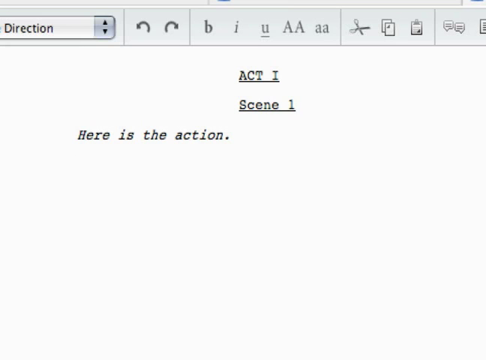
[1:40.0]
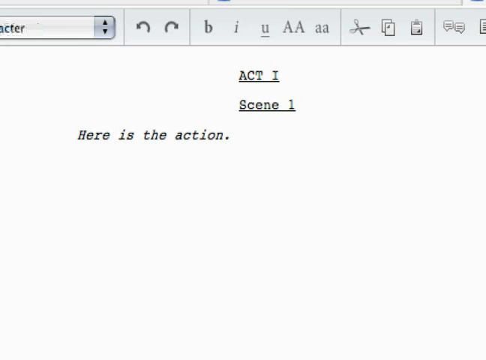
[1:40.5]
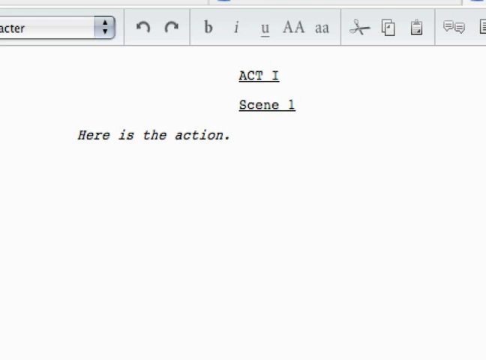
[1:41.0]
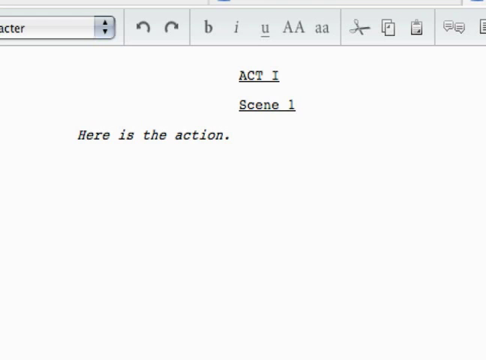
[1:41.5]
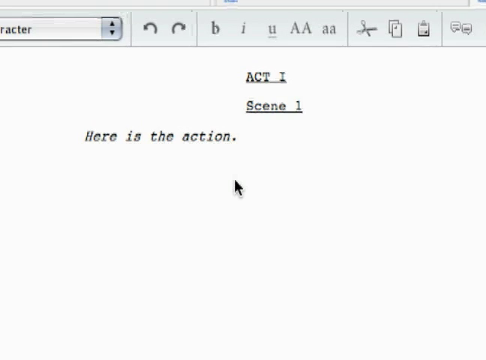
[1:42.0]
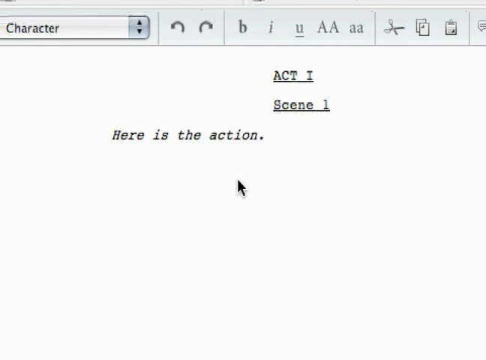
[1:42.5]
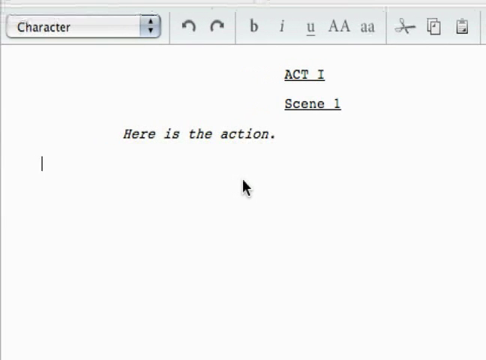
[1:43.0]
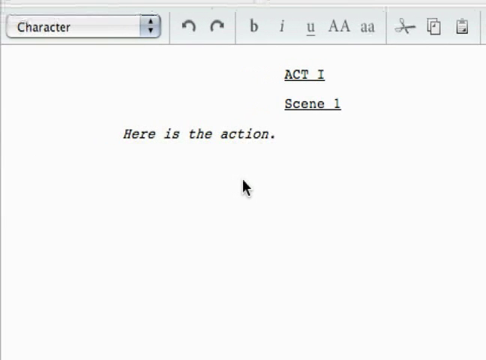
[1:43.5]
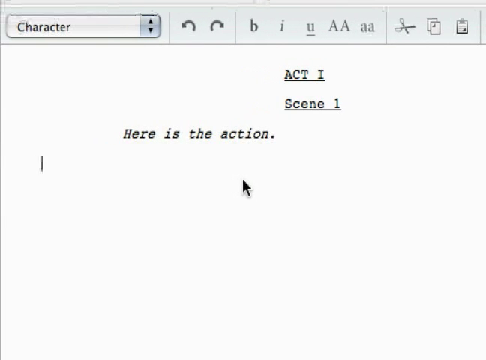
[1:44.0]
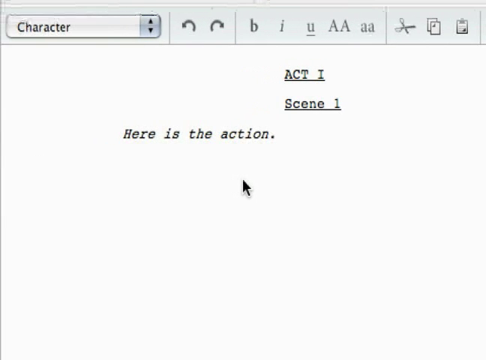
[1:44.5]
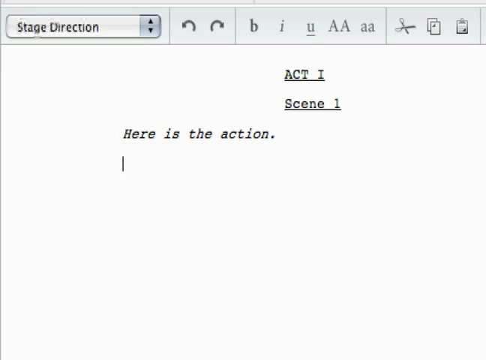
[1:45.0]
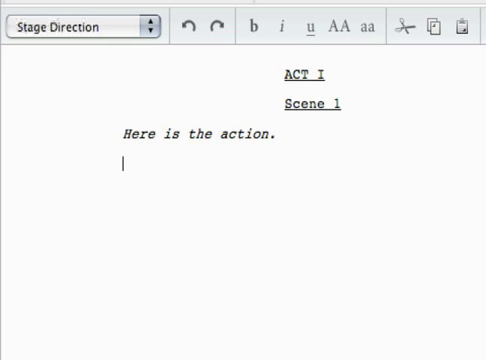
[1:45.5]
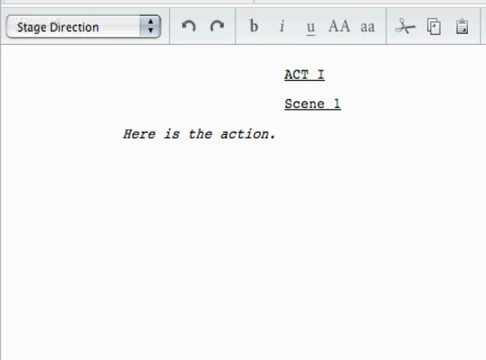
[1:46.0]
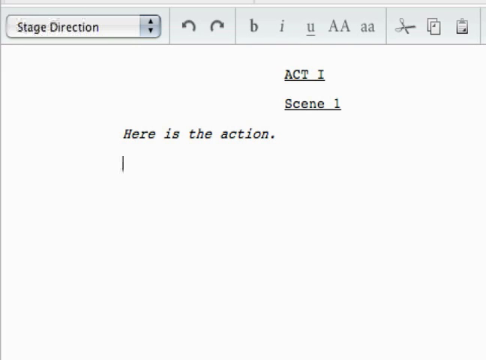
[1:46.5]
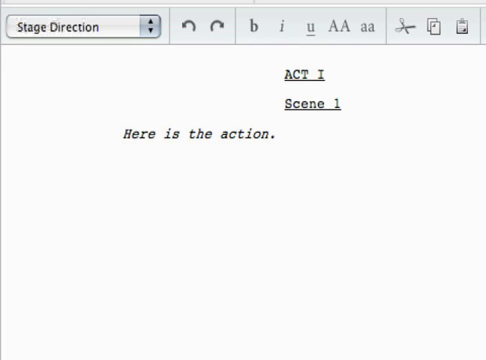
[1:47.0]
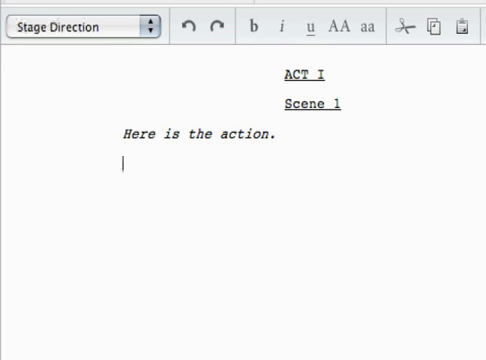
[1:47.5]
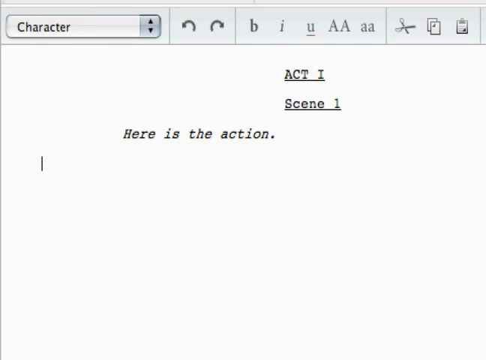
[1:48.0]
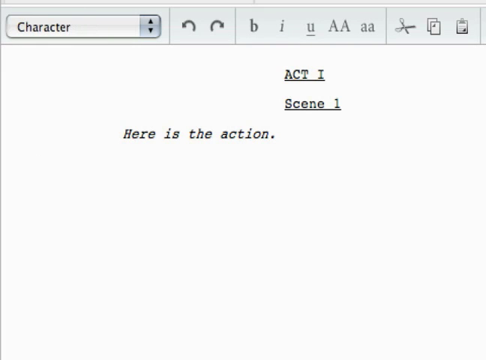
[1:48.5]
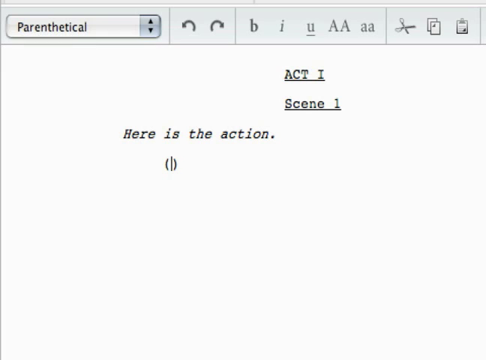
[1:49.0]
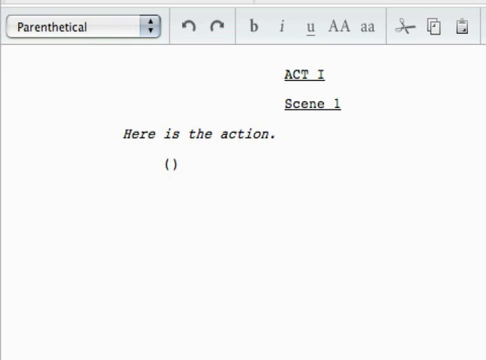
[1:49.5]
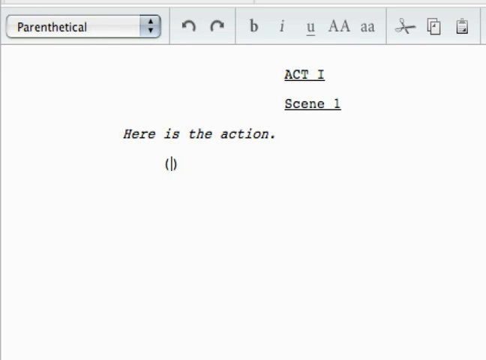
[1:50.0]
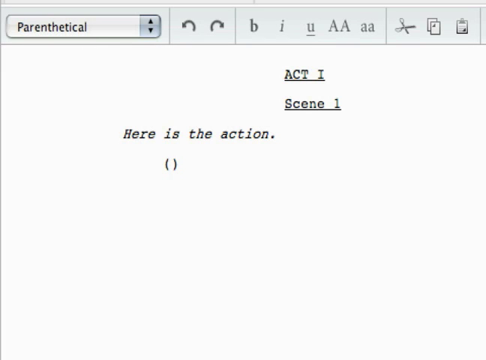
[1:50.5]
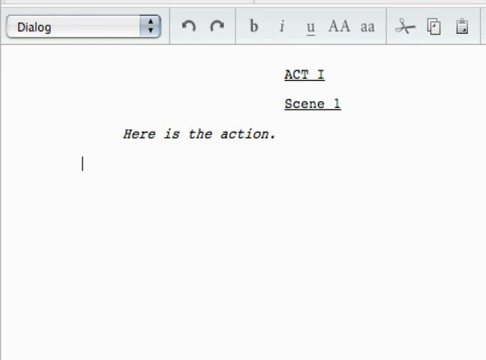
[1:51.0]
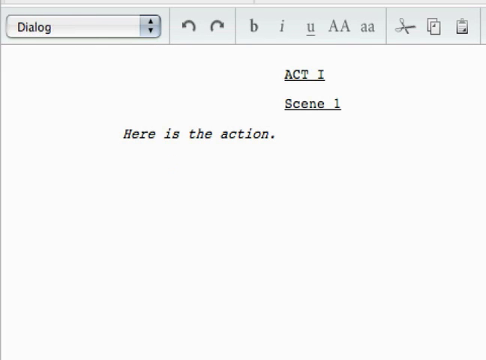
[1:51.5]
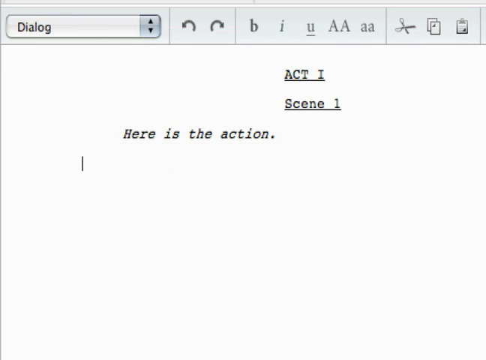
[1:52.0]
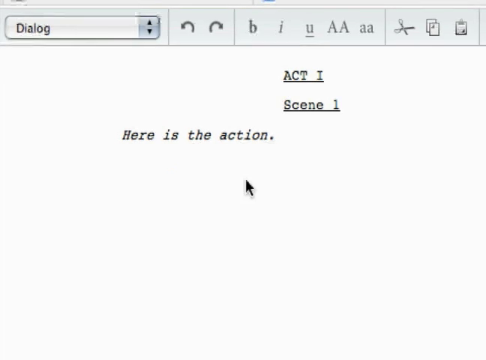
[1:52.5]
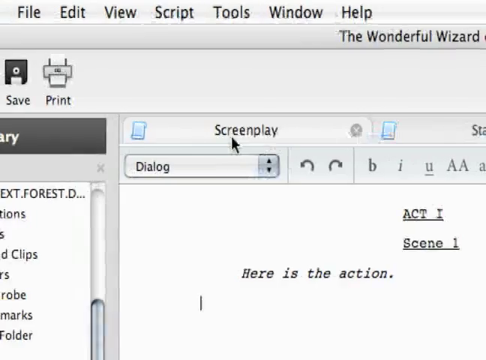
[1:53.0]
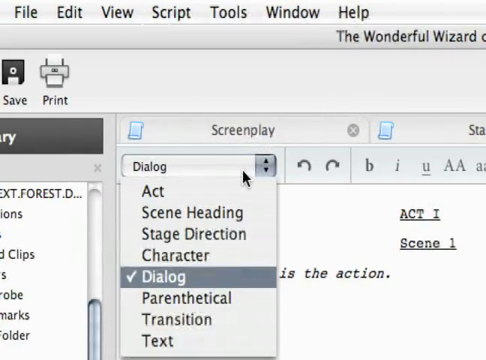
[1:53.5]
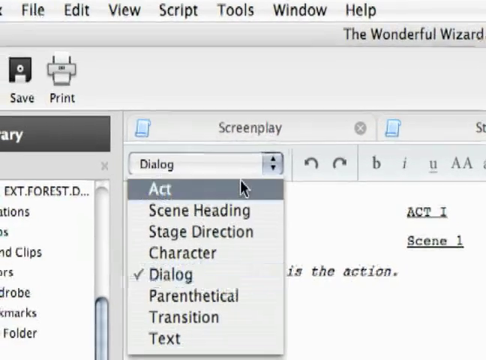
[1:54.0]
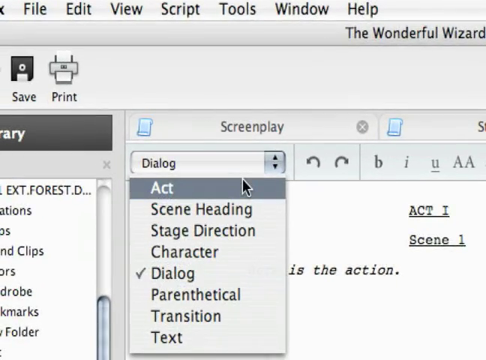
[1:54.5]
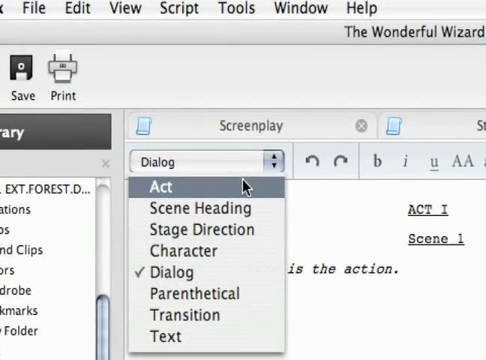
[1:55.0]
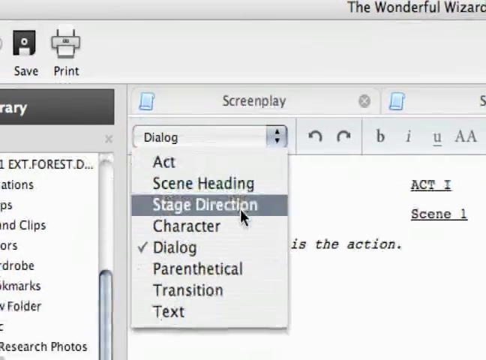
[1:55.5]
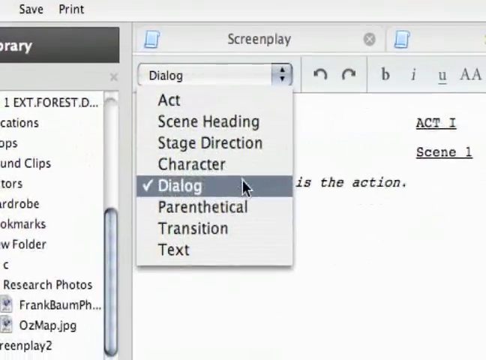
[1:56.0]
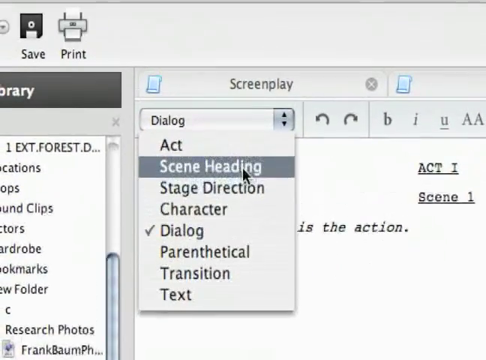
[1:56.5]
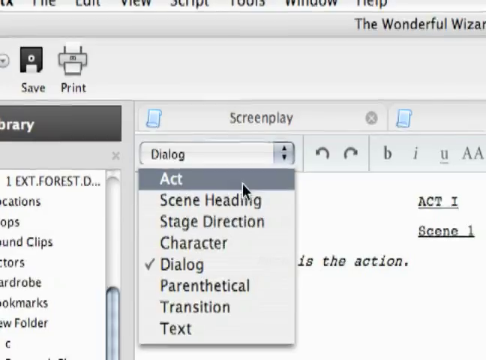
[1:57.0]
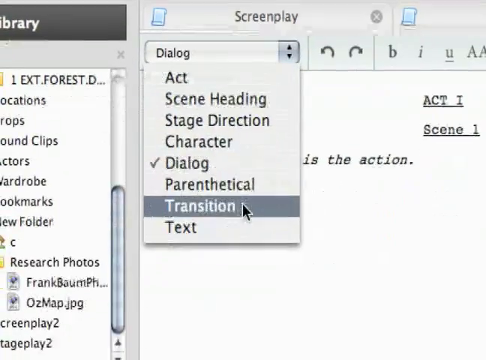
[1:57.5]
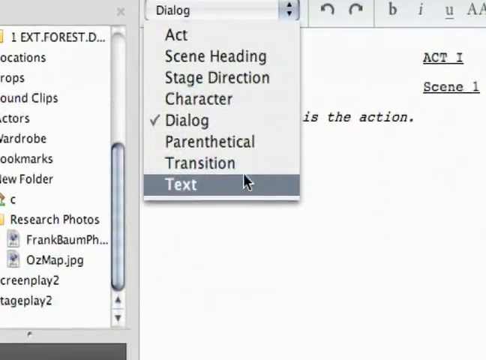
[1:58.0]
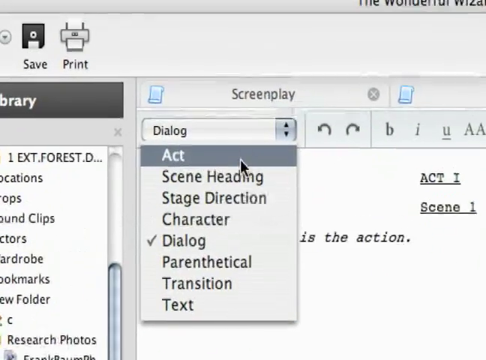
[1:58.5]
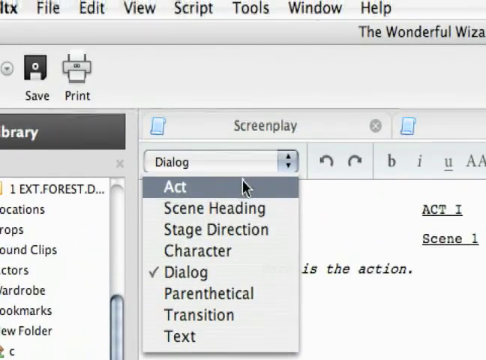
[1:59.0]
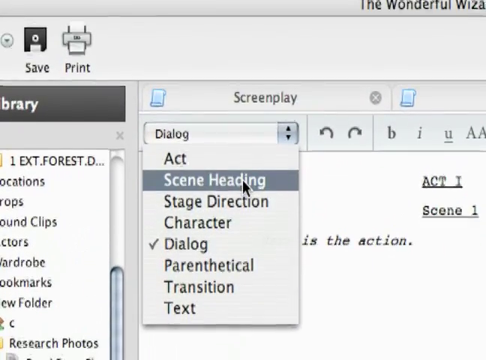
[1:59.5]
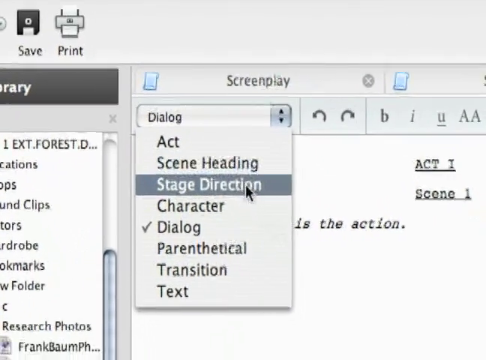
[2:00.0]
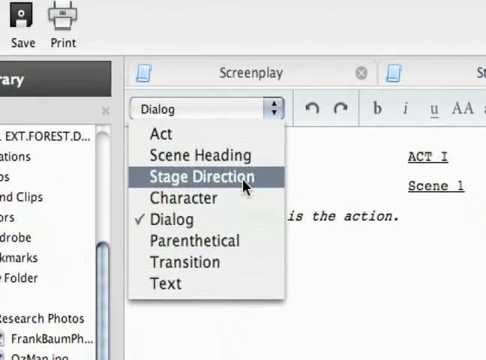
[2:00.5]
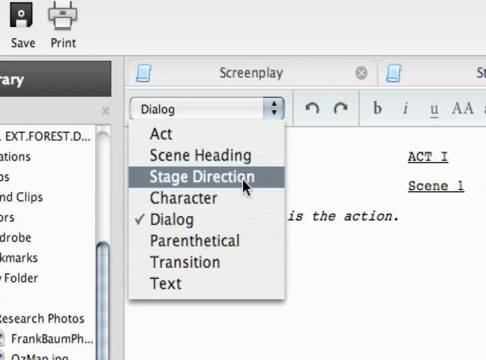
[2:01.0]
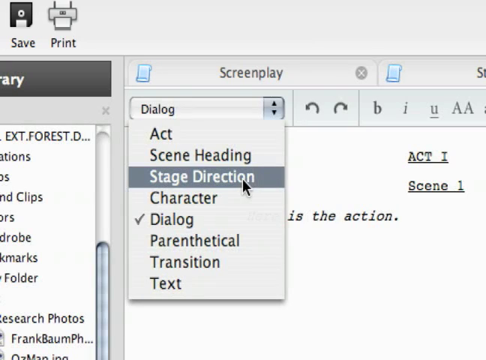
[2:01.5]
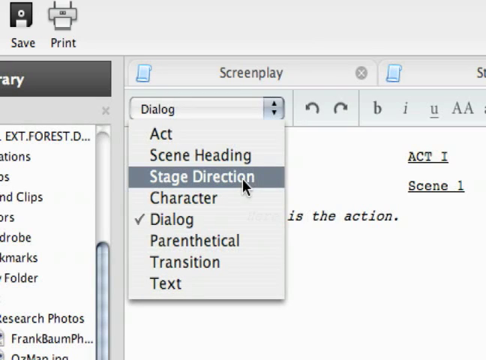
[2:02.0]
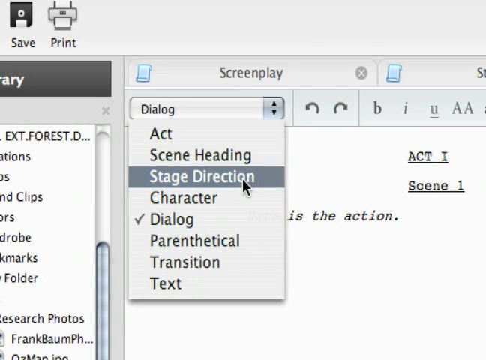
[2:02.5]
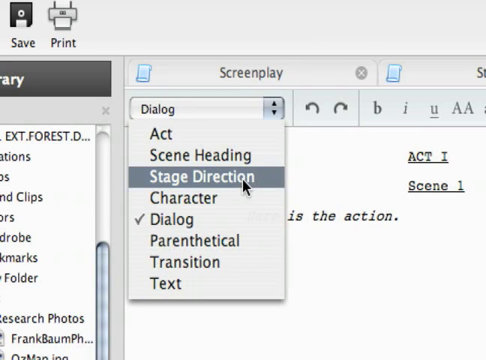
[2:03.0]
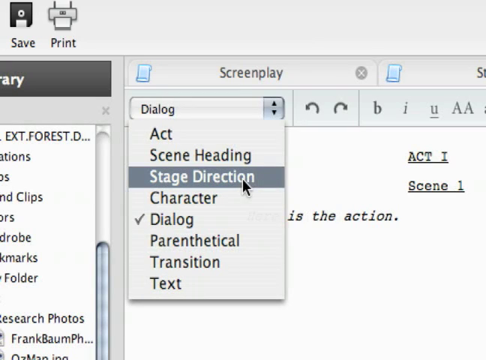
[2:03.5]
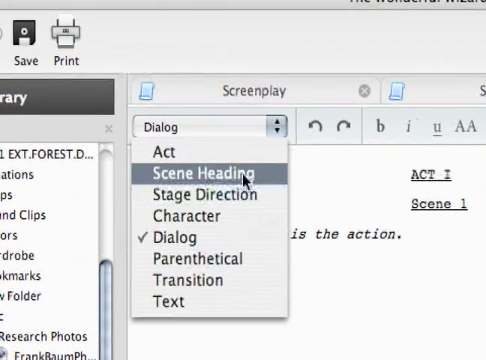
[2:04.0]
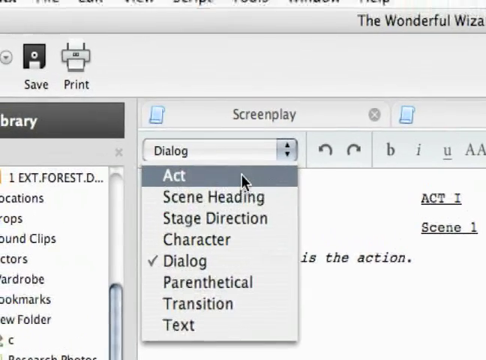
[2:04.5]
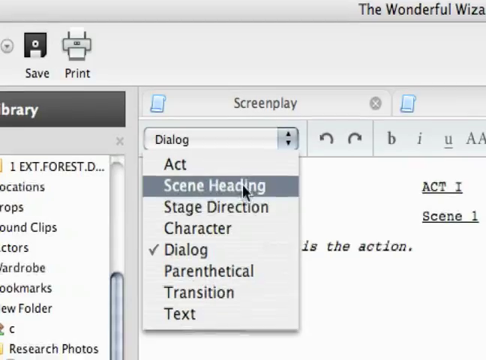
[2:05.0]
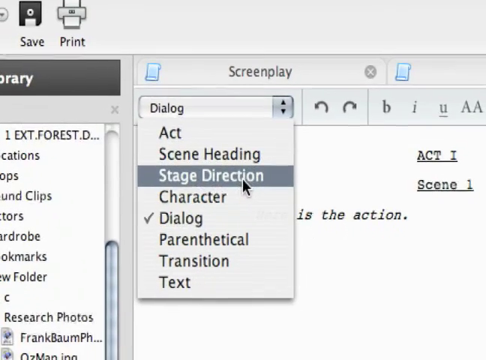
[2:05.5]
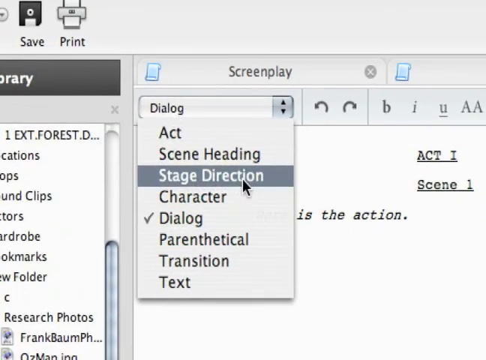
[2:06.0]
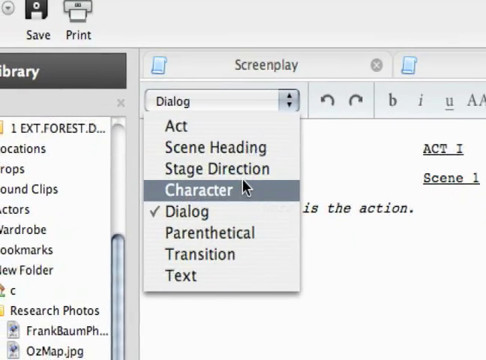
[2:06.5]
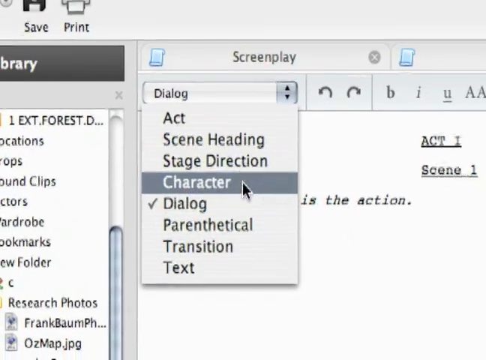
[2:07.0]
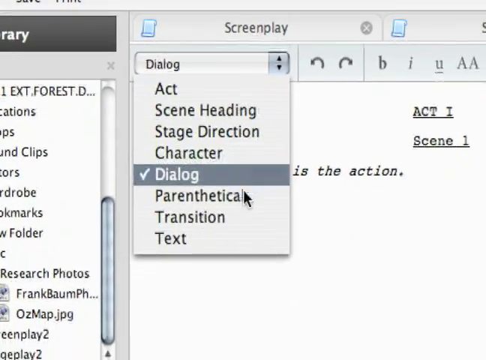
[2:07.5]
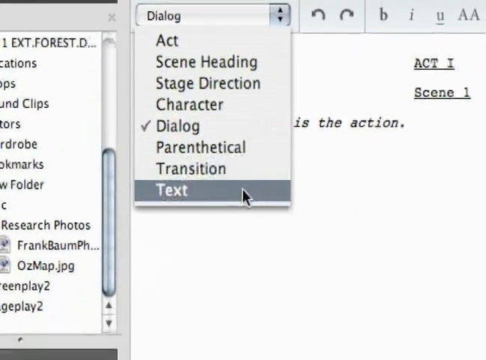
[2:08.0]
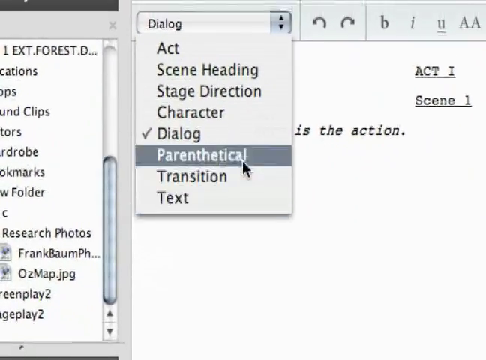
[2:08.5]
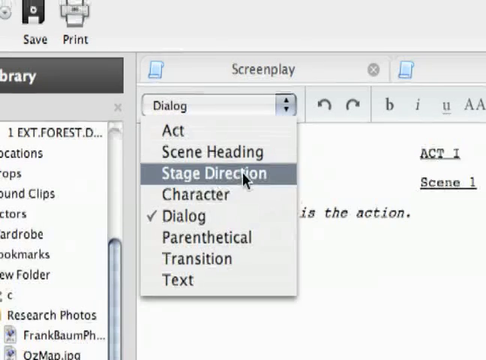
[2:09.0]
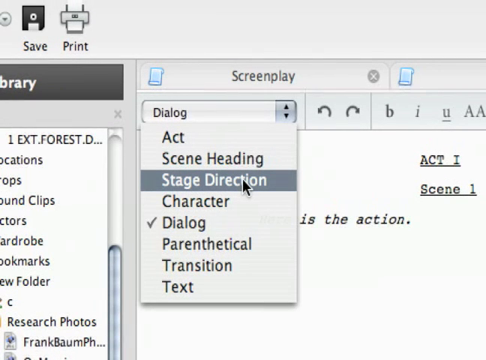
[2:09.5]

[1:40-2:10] The top-left collapsible menu switches to Character, which moves the text entry bar to the left of the sentence "Here is the action." The menu then flips back to Stage Direction, and the text entry bar returns to its original position under the first word of the sentence. It switches to Character again, and the bar moves to the left of the sentence once more. The option then switches to Parenthetical, and a set of parentheses appears underneath. Next it switches to Dialogue, which positions the text entry bar to the left of the first sentence. The cursor and camera move up, the cursor opens the collapsible menu and moves up and down over the options, each highlighted in gray as the cursor passes over it.